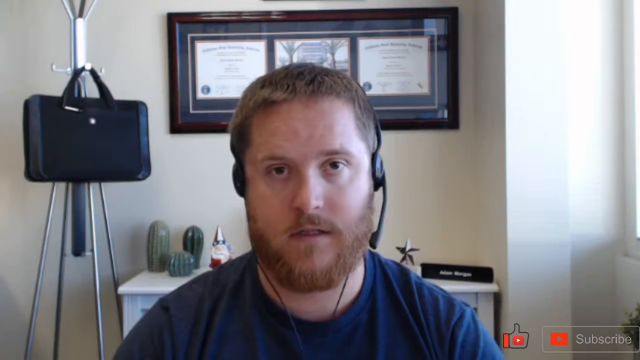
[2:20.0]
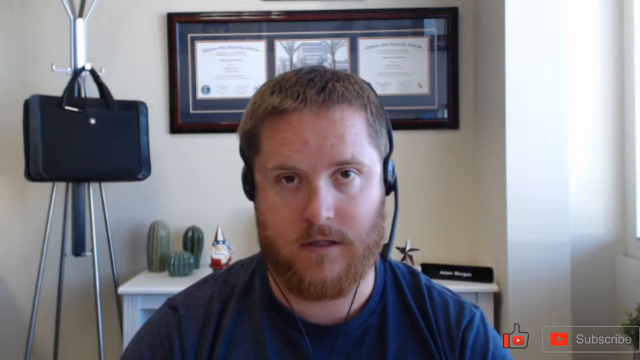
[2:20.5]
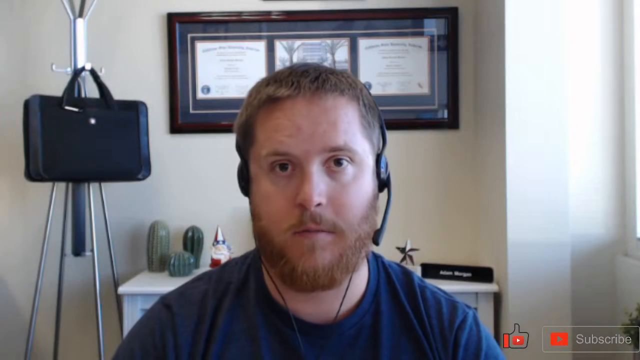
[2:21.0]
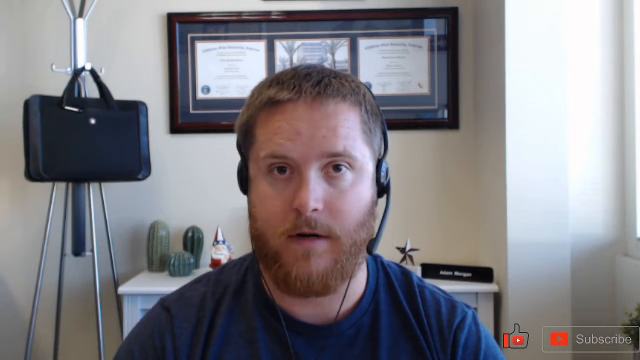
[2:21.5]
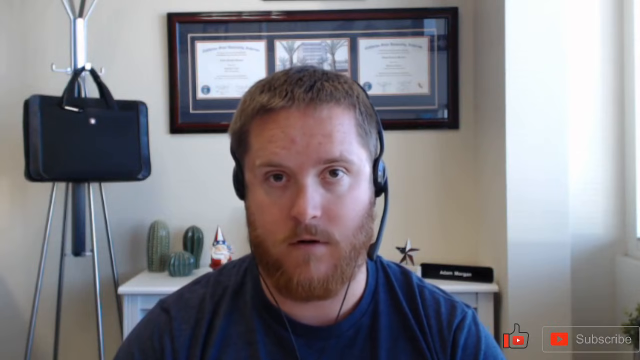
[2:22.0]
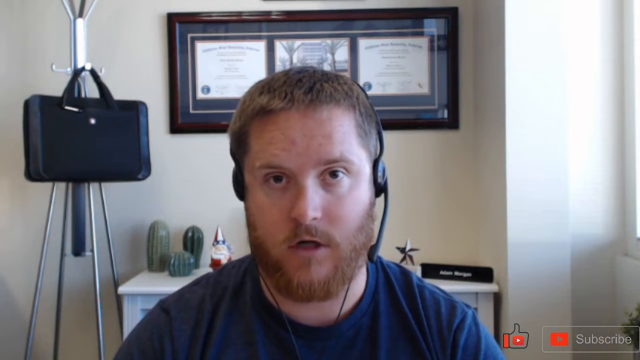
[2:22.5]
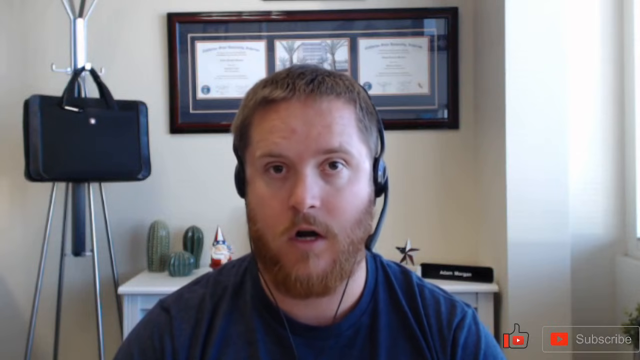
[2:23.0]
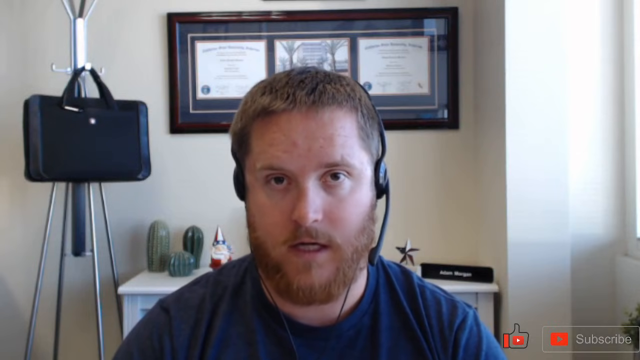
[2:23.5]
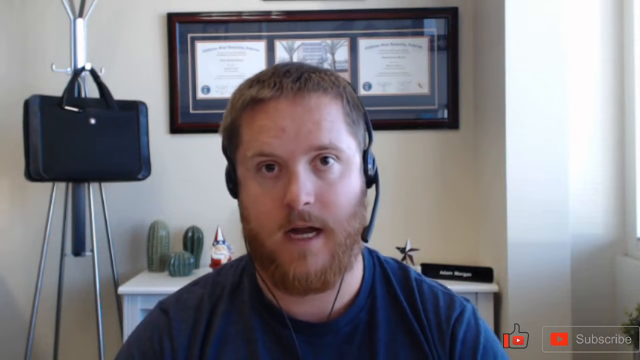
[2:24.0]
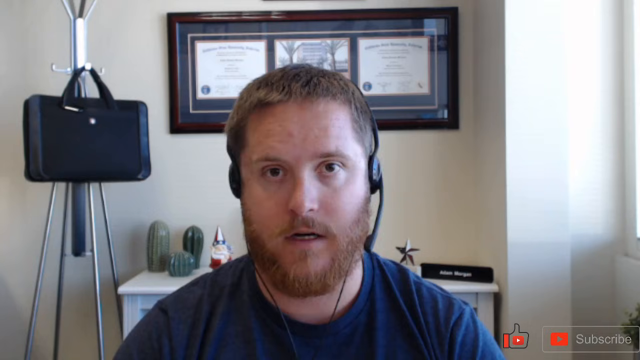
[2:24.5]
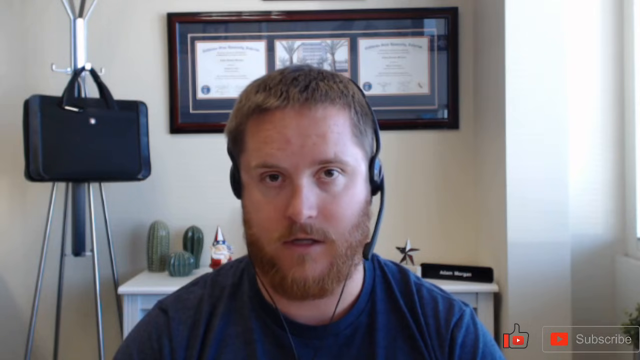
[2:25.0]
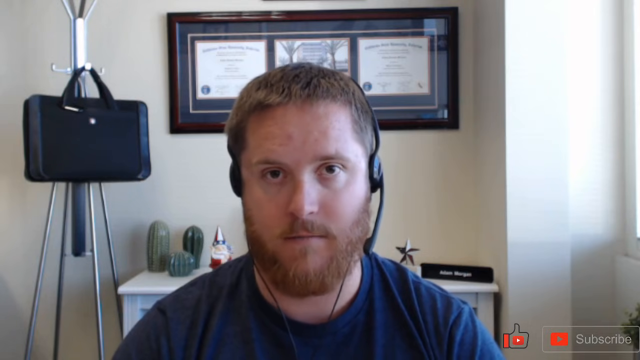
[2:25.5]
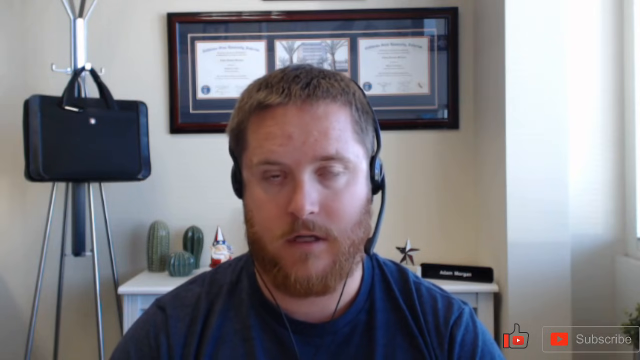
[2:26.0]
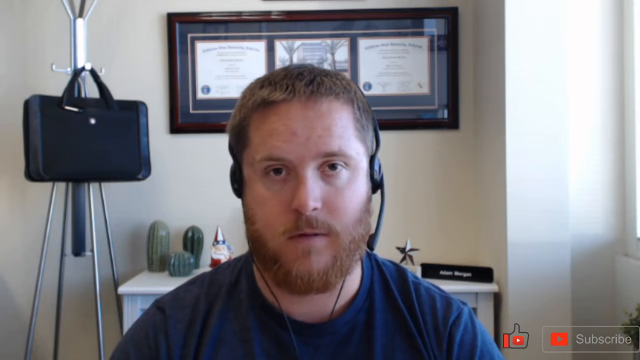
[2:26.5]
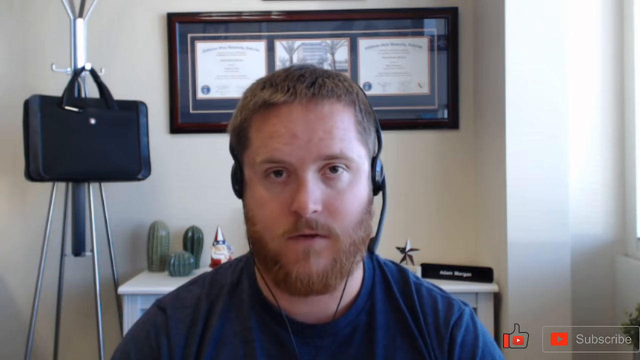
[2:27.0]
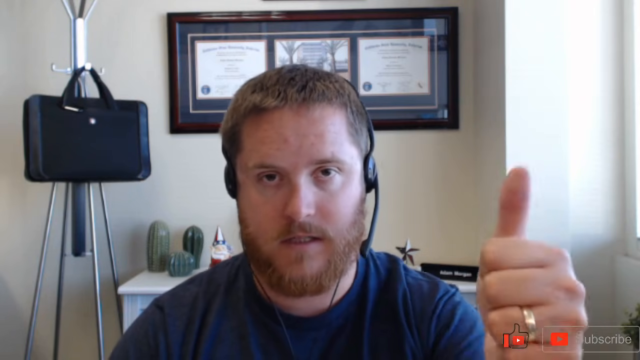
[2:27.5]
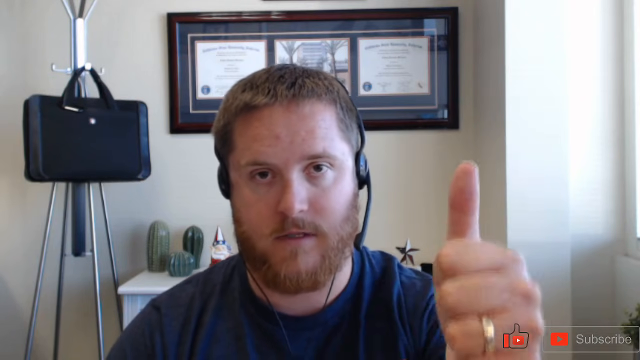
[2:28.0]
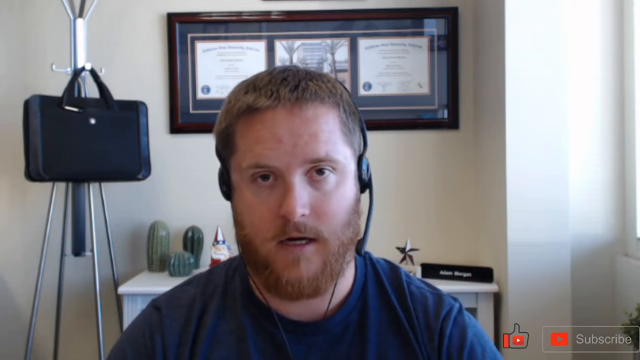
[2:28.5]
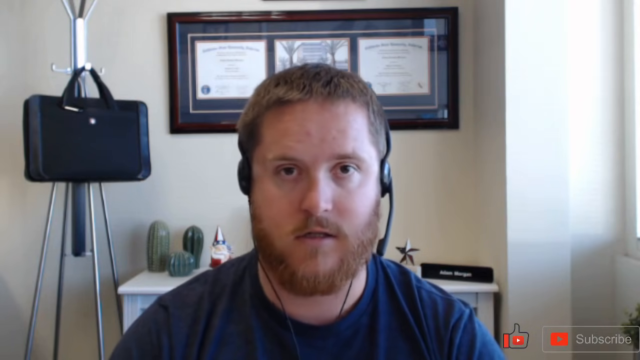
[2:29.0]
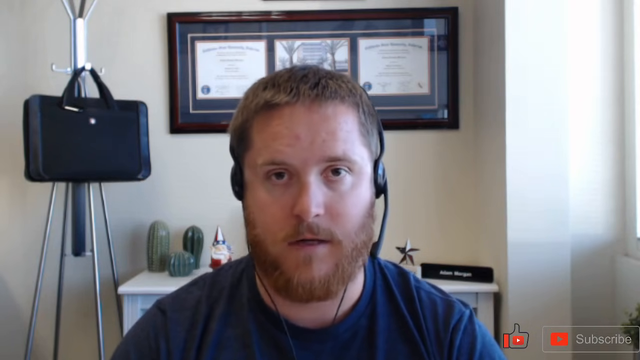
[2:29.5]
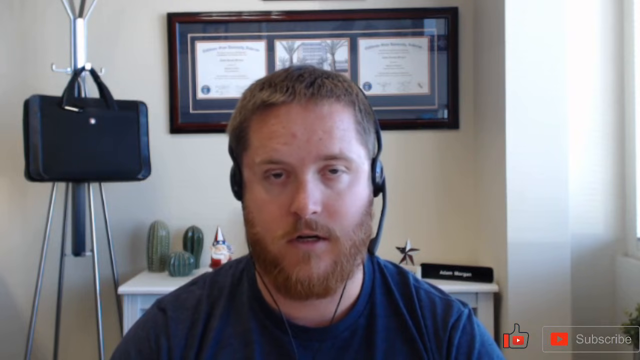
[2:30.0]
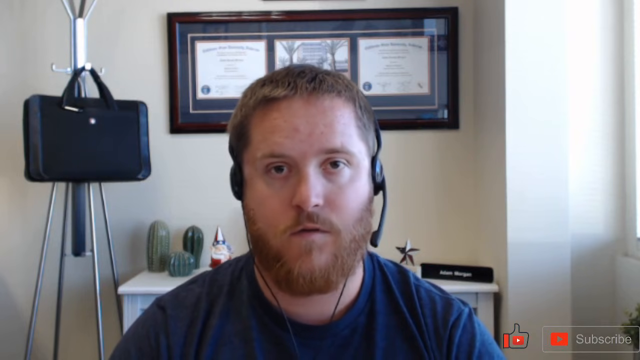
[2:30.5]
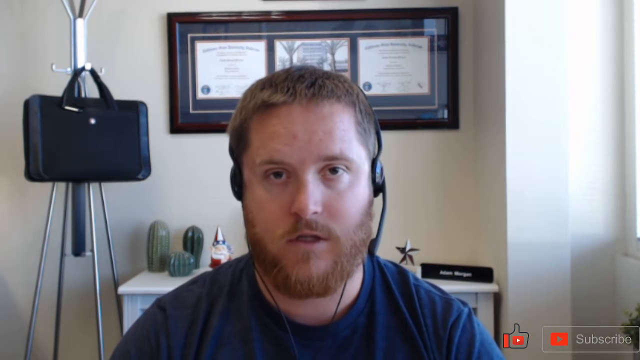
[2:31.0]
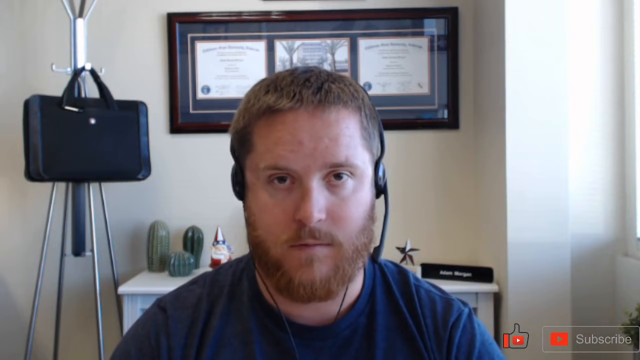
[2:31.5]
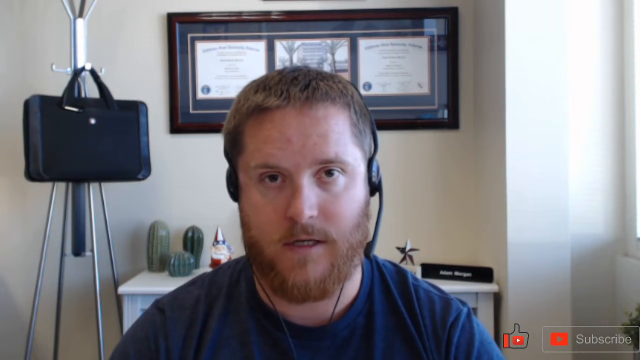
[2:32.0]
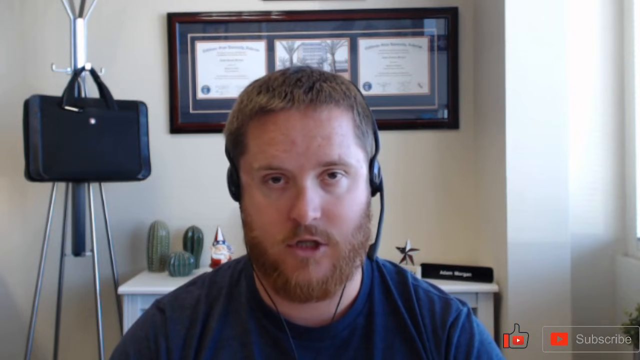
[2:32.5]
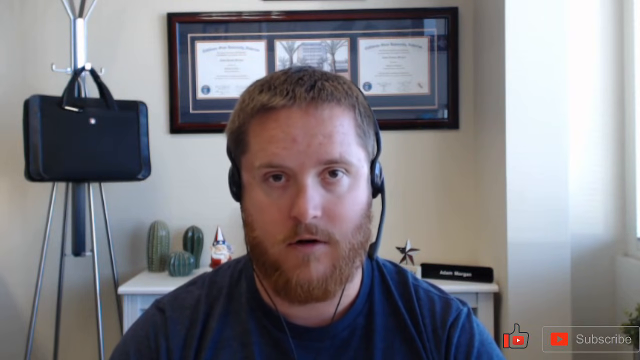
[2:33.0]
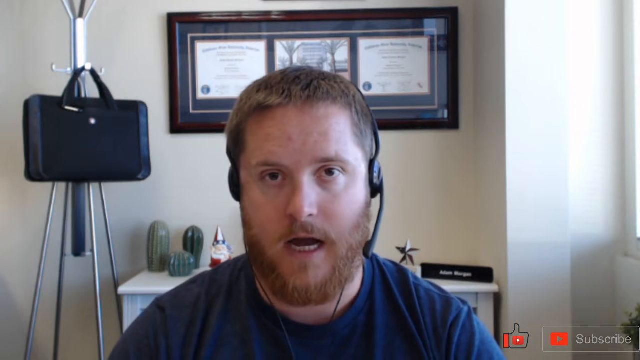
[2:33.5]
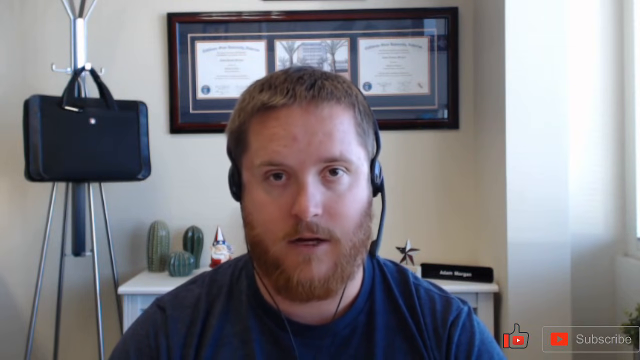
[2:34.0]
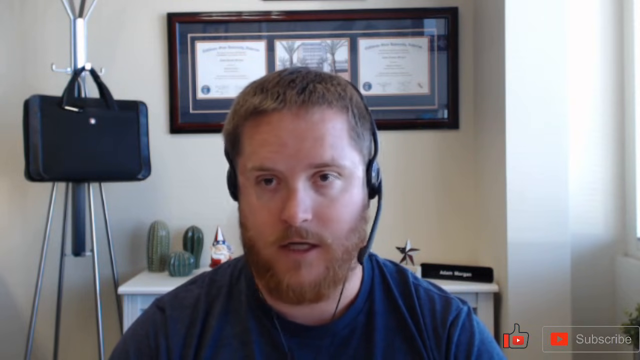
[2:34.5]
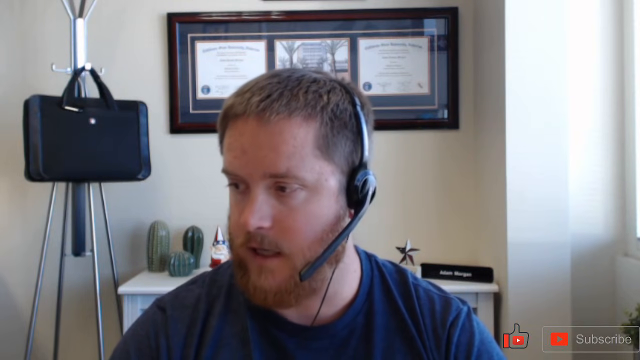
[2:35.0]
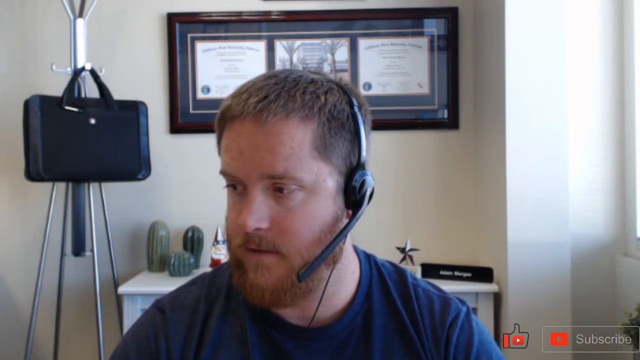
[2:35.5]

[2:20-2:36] The screen returns to the full shot of the man in his room speaking to the camera. His mouth moves up and down while his eyebrows stay still, his head moves slightly up and down, and his body shifts slightly left and right. His eyes stay open, blinking only once until near the end, when there is a sort of half blink and then another blink. He raises his left hand and gives a thumbs up, the knuckles pointing directly at the camera; he has a silver ring on one finger. After the thumbs up his body shifts a little toward his right and back to even as he puts his arm down. At the end he looks down to his right, turning his head in that direction, and the video stops as he closes his mouth.